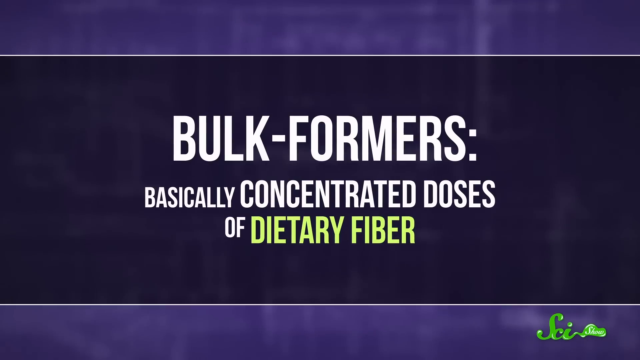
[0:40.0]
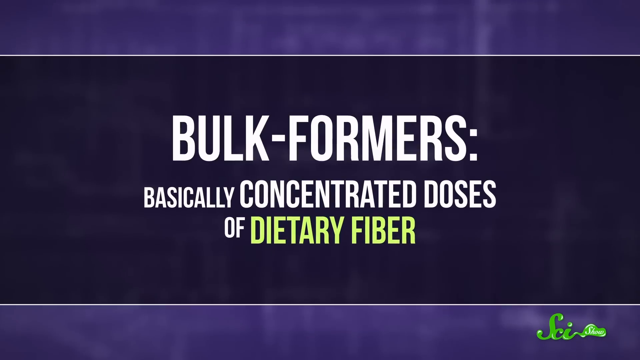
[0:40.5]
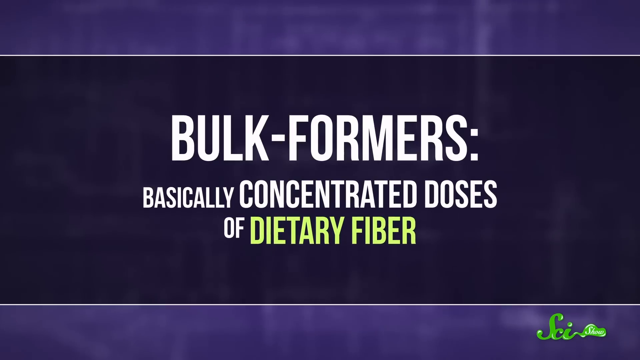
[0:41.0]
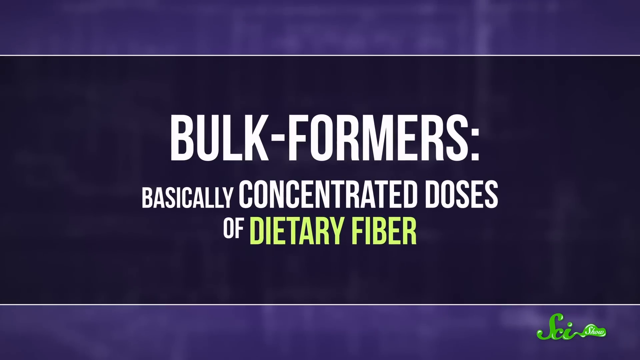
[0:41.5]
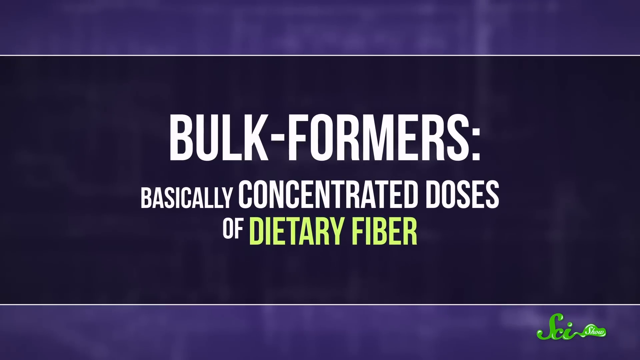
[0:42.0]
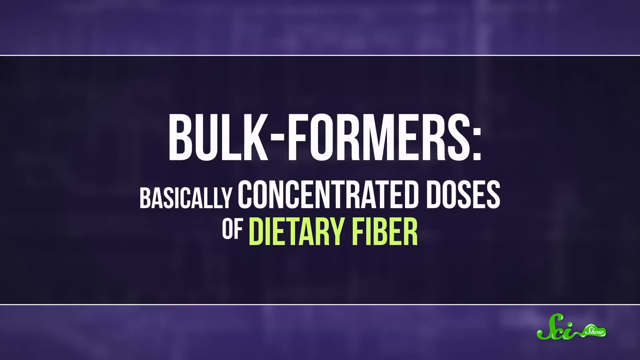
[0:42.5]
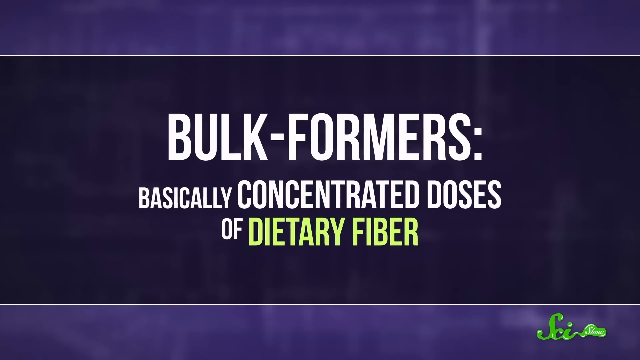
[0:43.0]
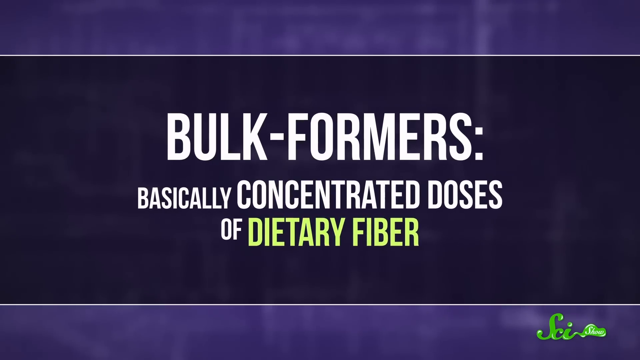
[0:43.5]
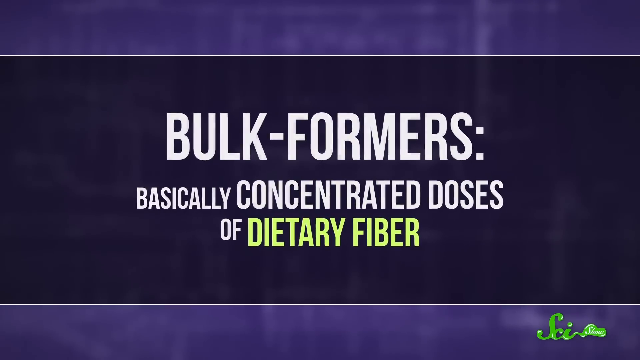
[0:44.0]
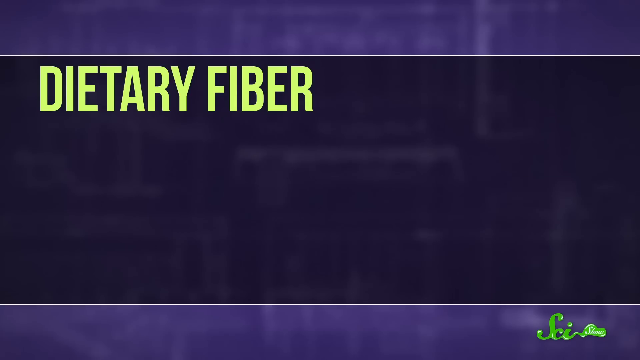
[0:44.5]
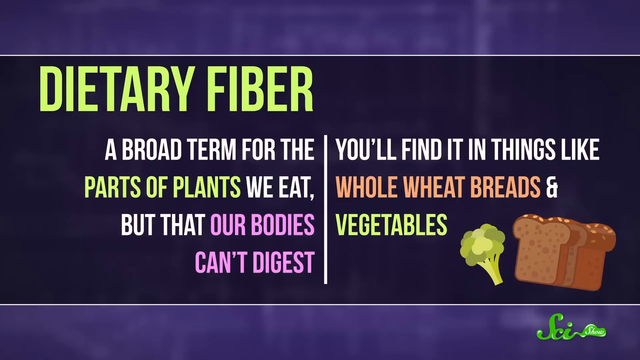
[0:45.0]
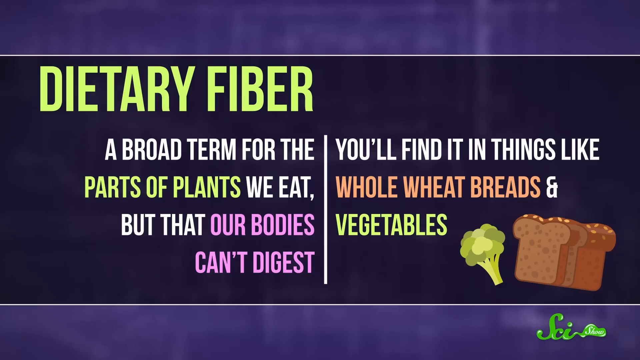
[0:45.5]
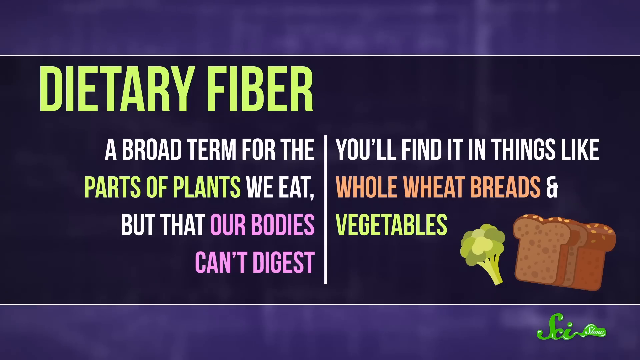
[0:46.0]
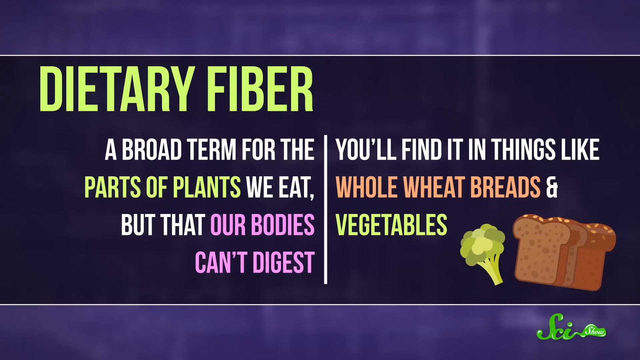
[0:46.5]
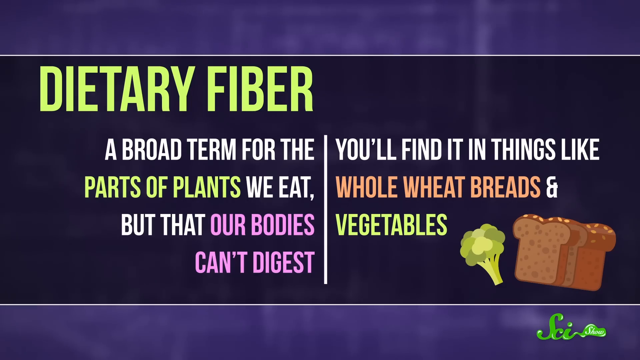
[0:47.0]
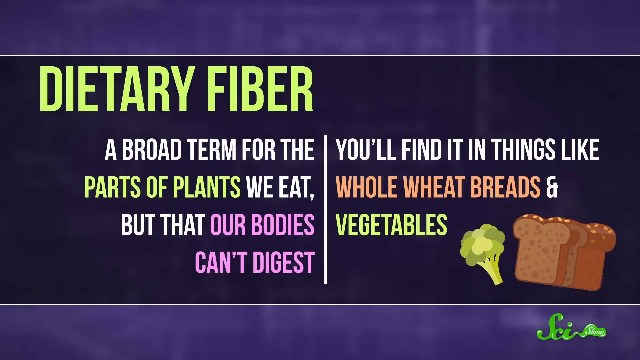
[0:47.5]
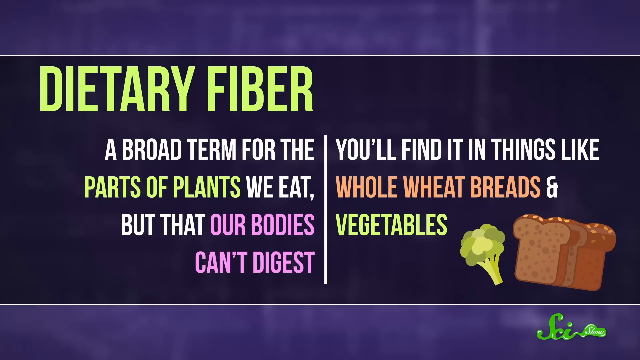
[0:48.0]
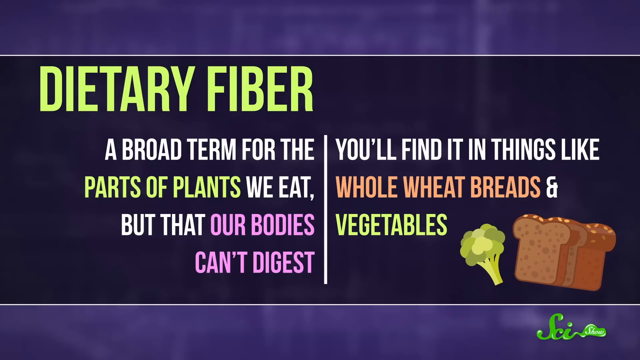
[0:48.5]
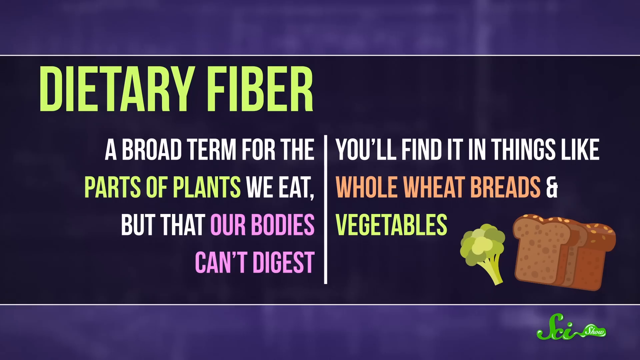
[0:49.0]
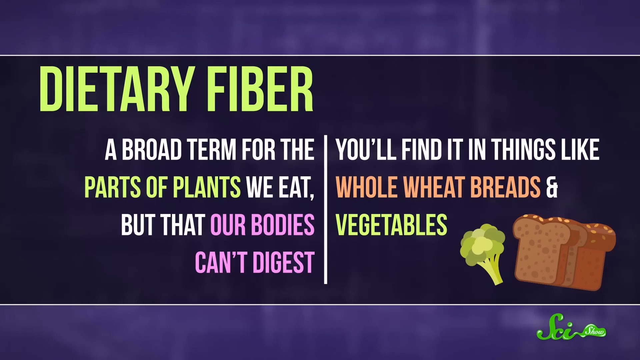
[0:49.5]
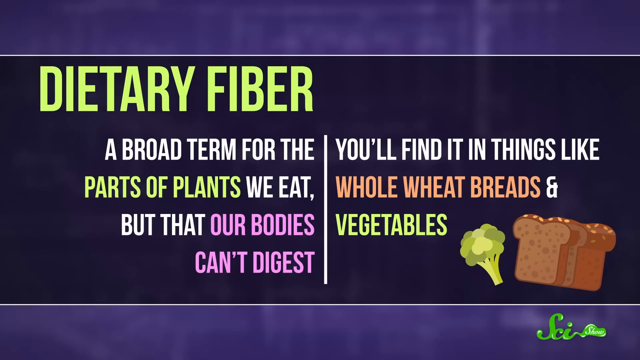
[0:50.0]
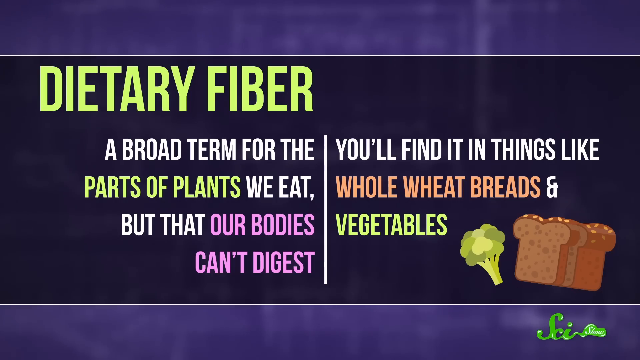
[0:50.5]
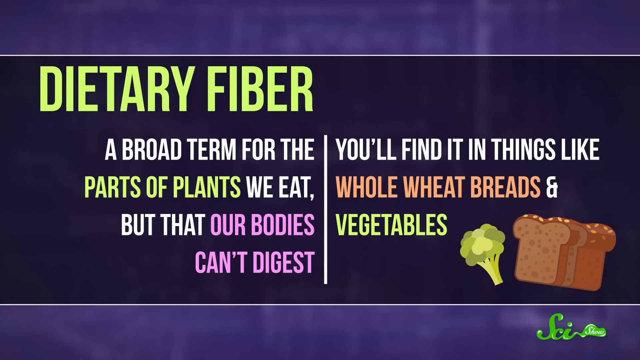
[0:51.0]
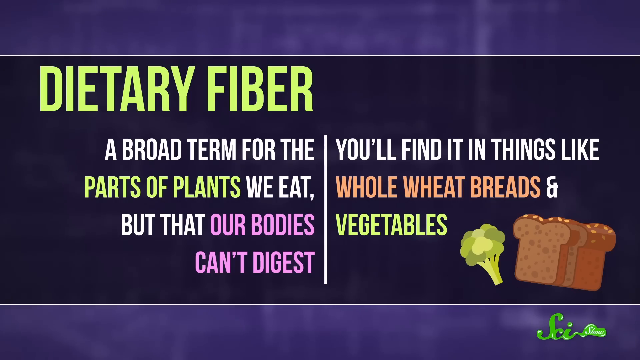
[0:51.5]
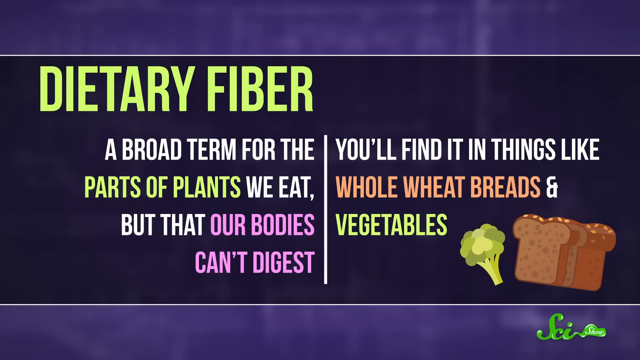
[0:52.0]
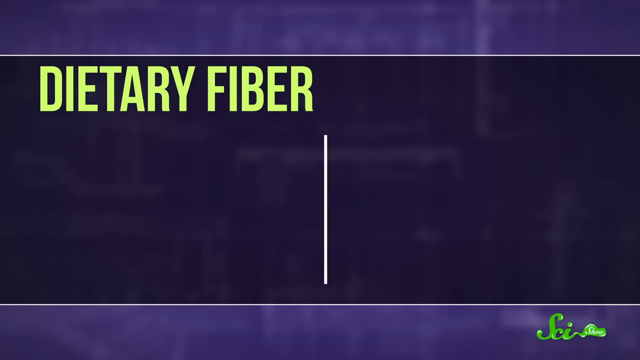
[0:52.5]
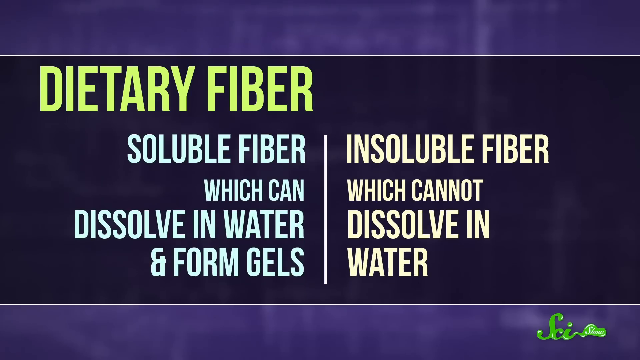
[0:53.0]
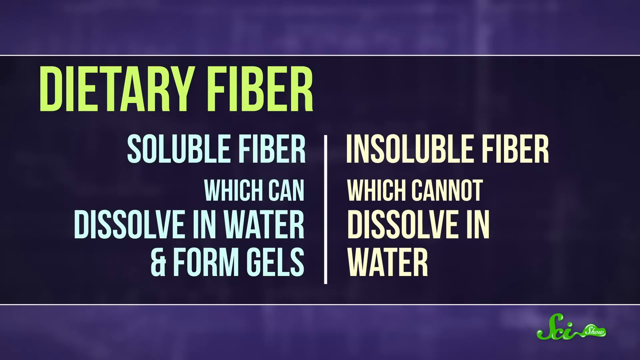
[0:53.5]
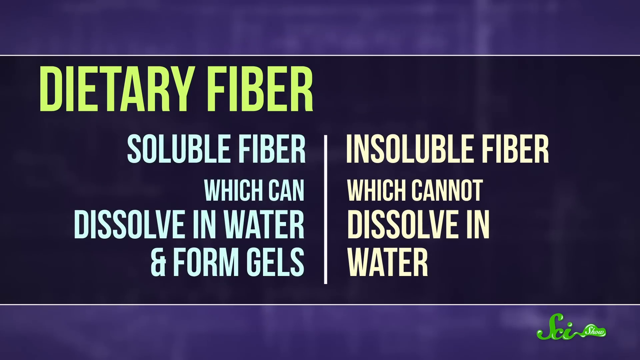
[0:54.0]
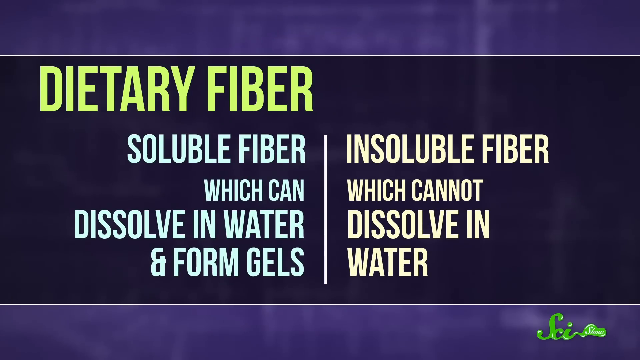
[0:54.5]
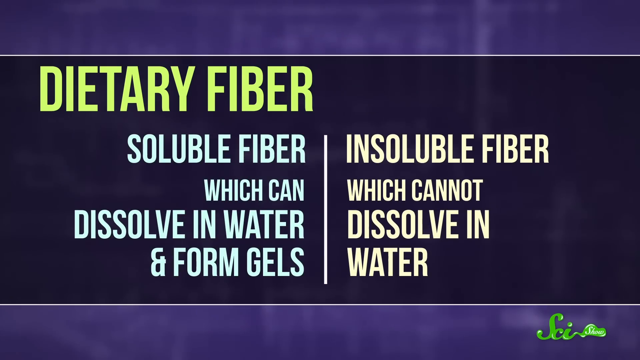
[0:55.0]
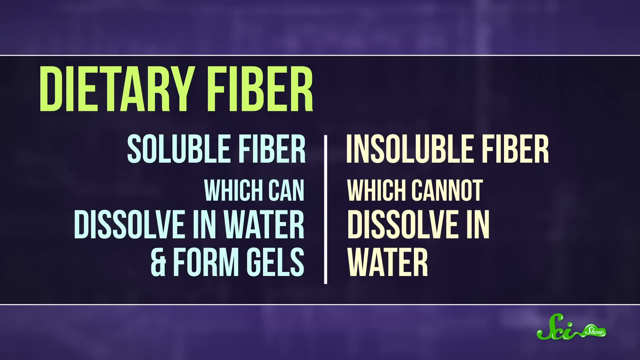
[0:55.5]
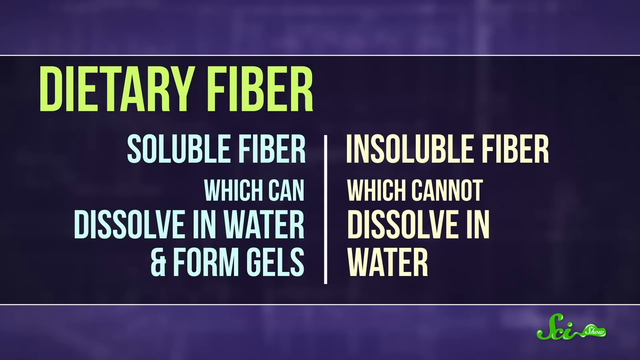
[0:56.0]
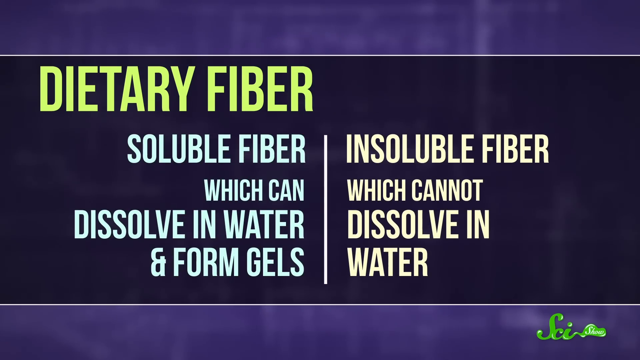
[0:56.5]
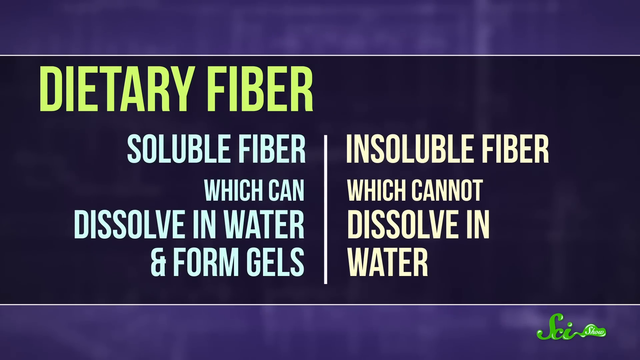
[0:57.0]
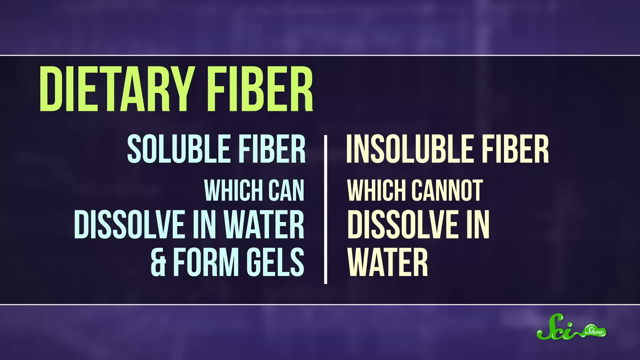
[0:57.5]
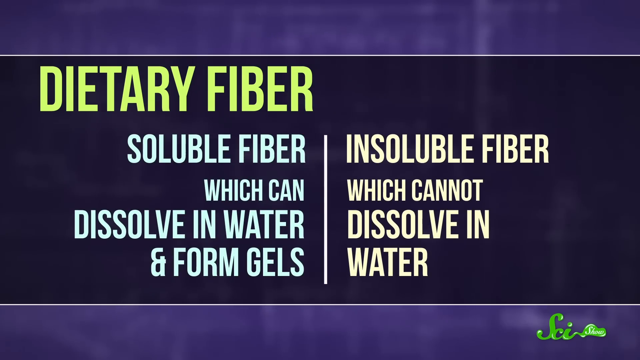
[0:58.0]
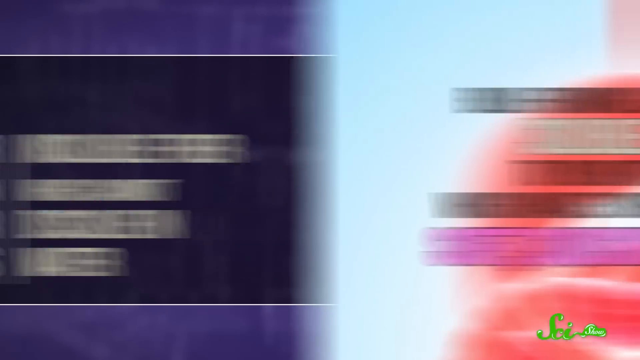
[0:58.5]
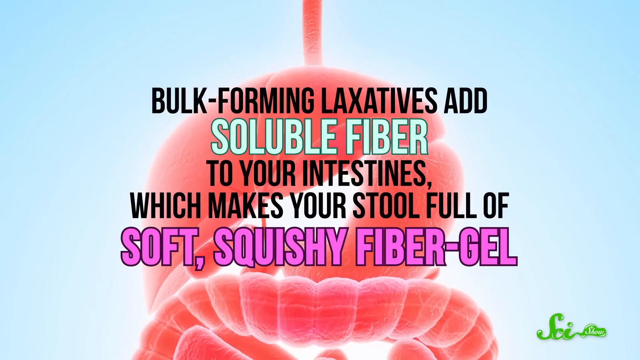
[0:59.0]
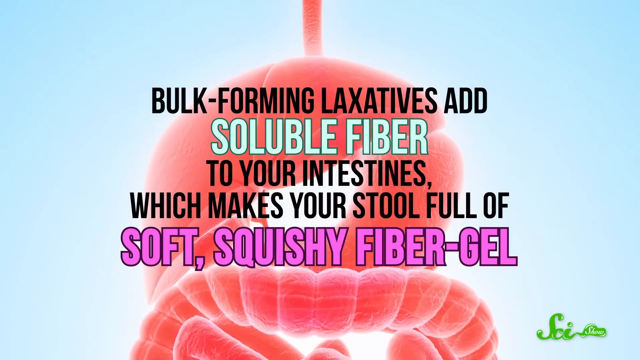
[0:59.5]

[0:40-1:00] On-screen text reads "bulk formers, basically concentrated doses of dietary fiber. A broad term for the parts of plants we eat but that our bodies can't digest. You'll find it in things like whole wheat breads and vegetables." A picture of broccoli appears, followed by a picture of what looks to be whole wheat bread. Text then reads "soluble fiber, which can dissolve in water and form gels" and "insoluble fiber, which cannot dissolve in water." Text about bulk-forming laxatives adding soluble fiber to the intestines follows.